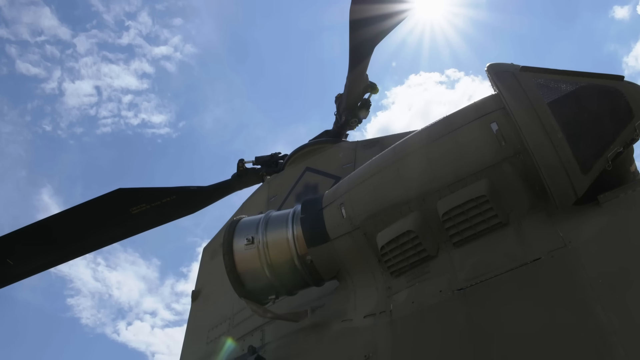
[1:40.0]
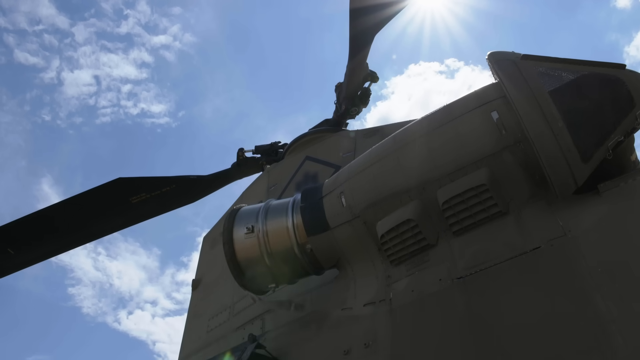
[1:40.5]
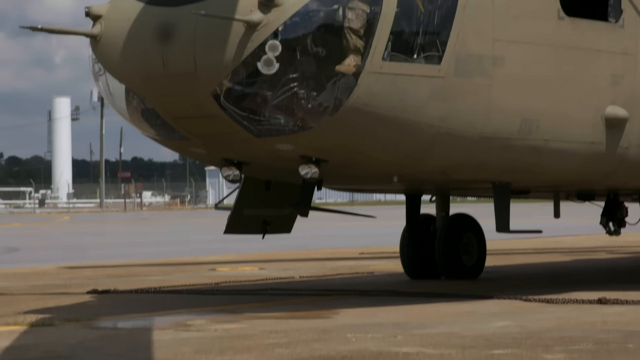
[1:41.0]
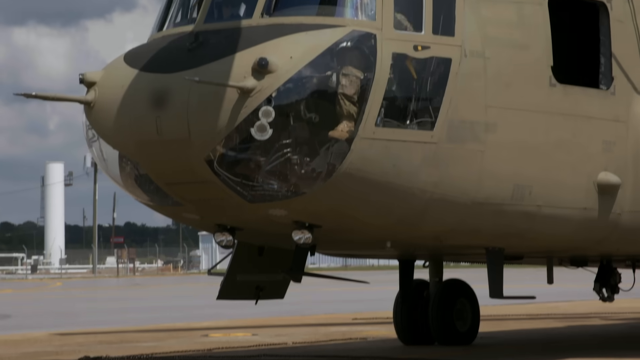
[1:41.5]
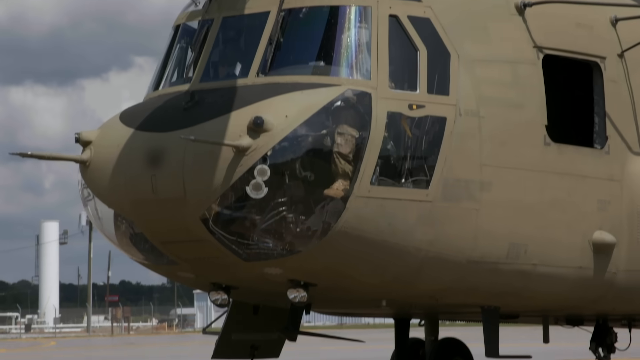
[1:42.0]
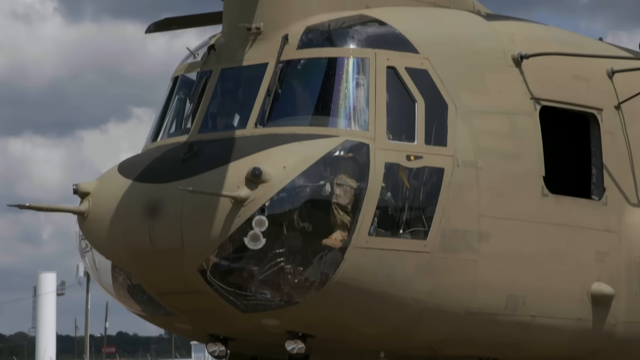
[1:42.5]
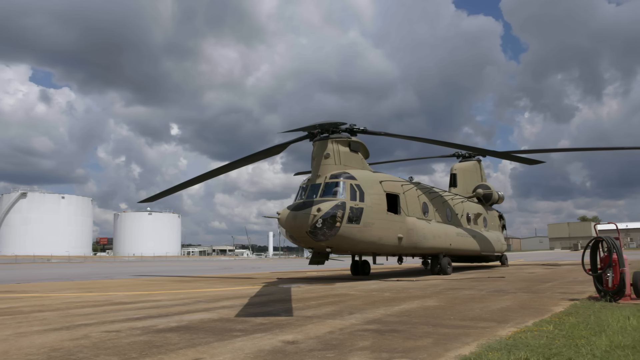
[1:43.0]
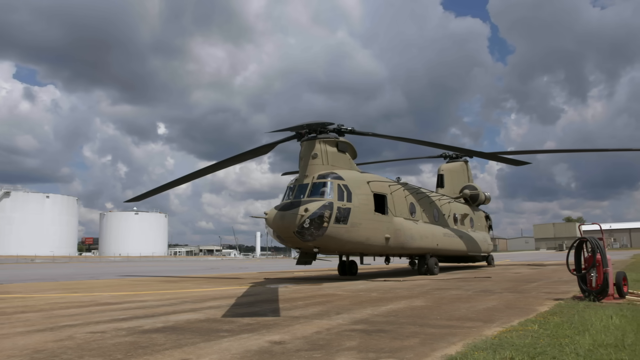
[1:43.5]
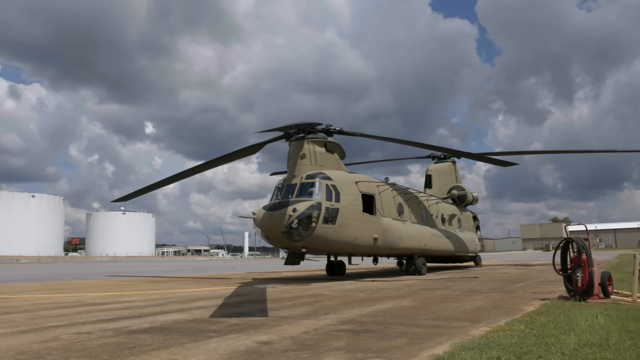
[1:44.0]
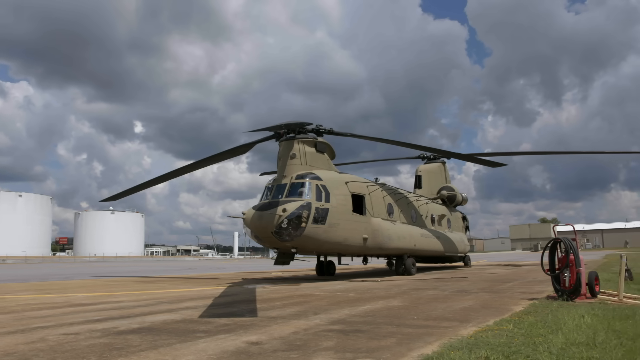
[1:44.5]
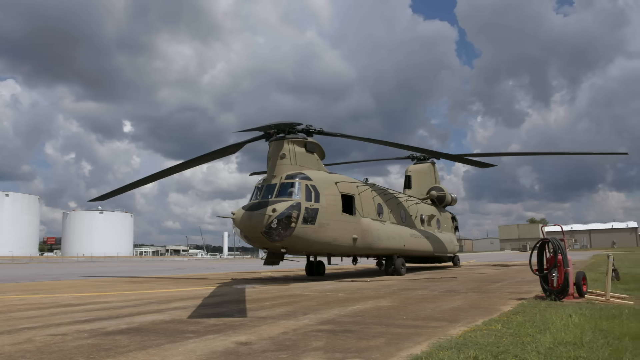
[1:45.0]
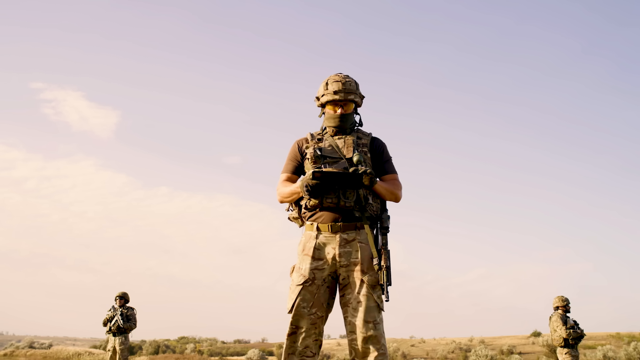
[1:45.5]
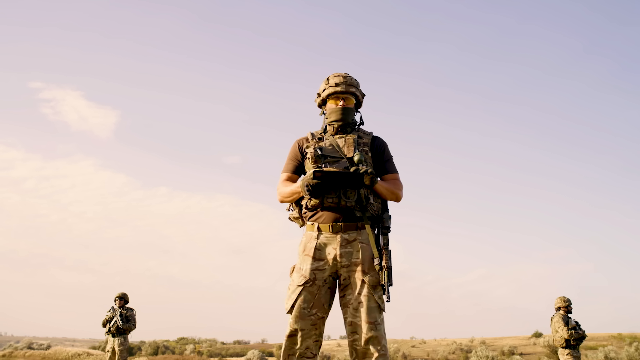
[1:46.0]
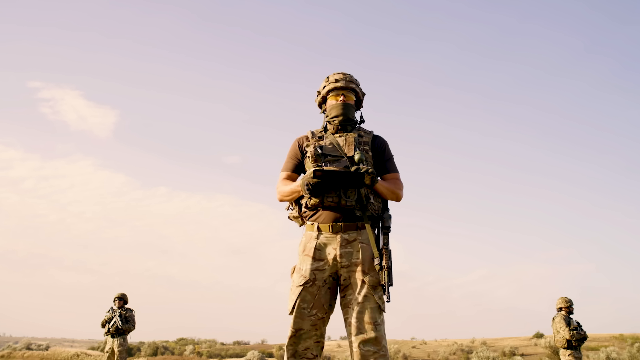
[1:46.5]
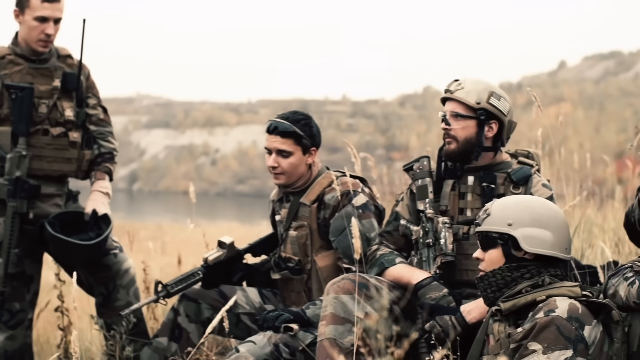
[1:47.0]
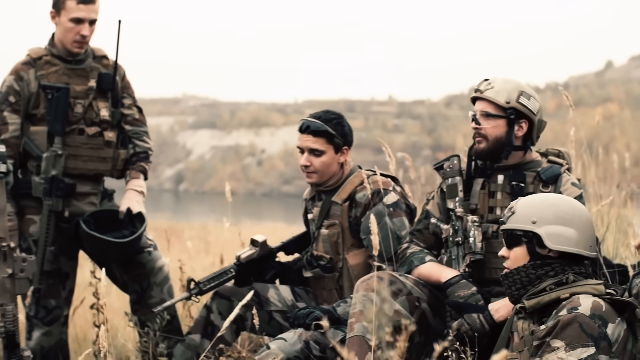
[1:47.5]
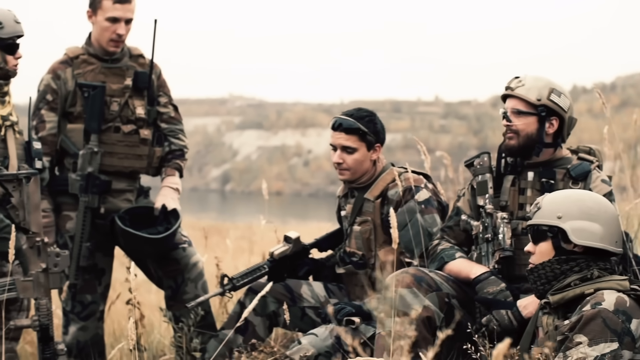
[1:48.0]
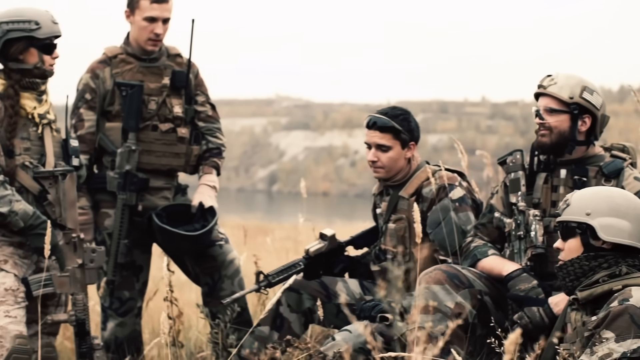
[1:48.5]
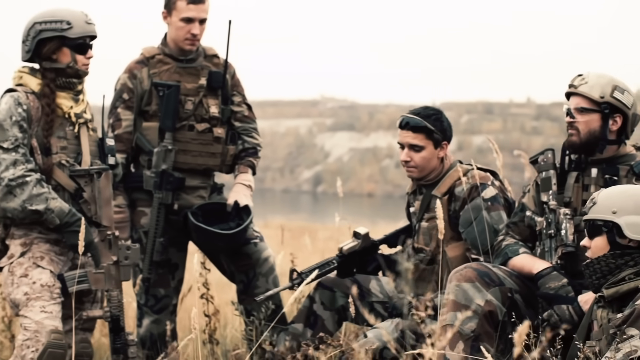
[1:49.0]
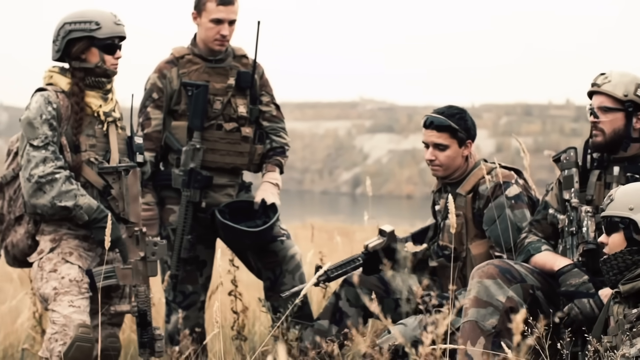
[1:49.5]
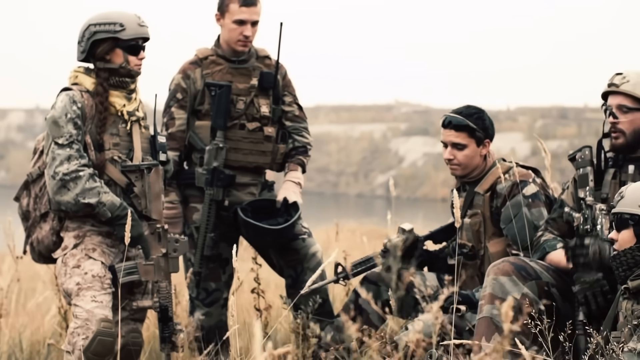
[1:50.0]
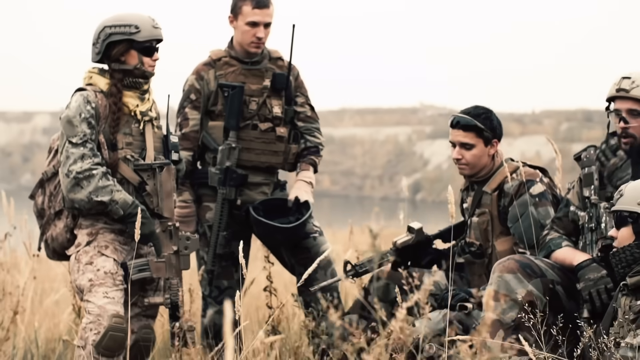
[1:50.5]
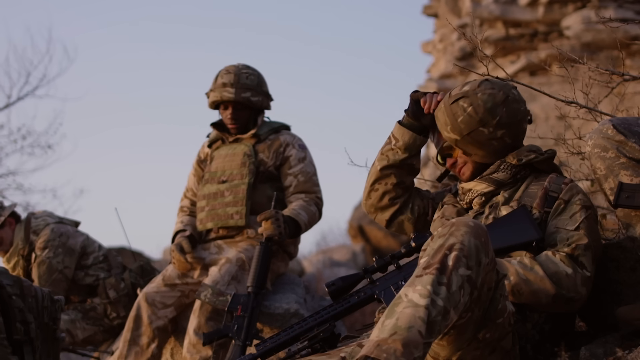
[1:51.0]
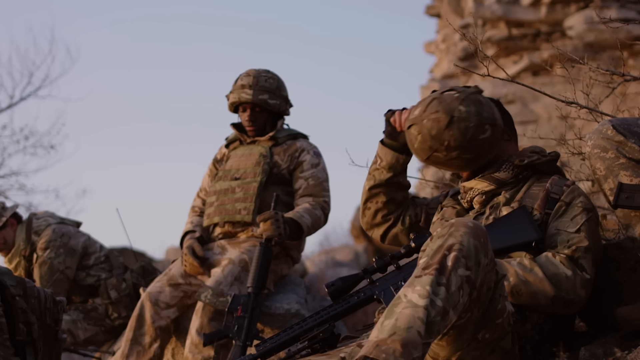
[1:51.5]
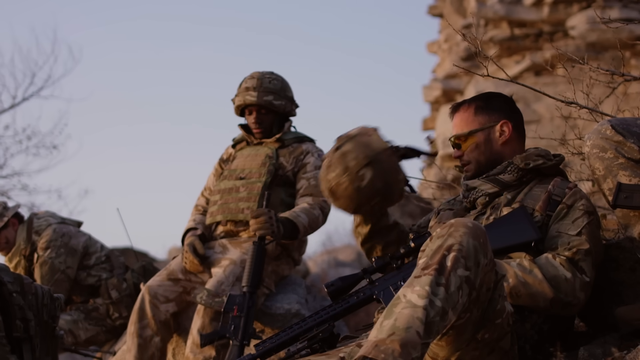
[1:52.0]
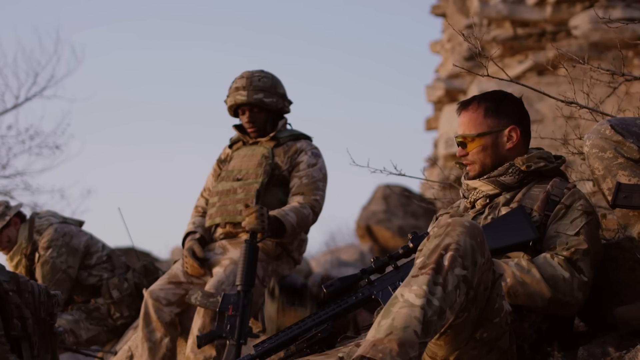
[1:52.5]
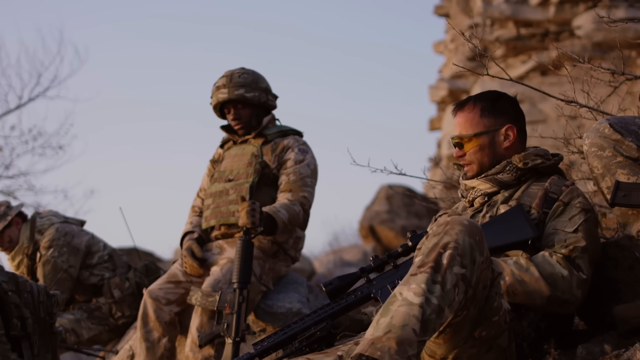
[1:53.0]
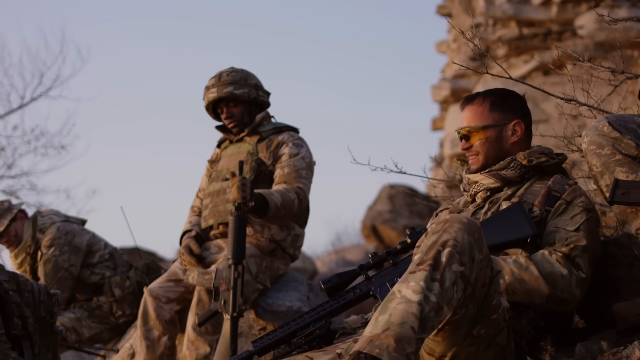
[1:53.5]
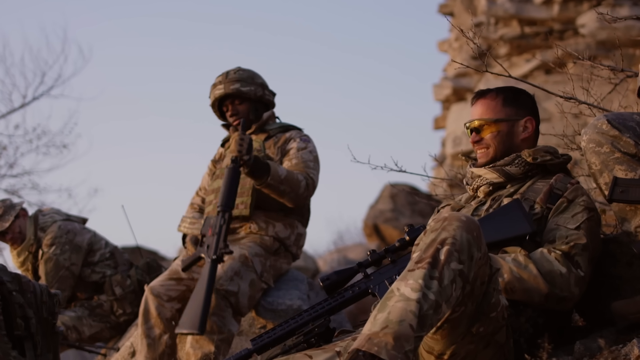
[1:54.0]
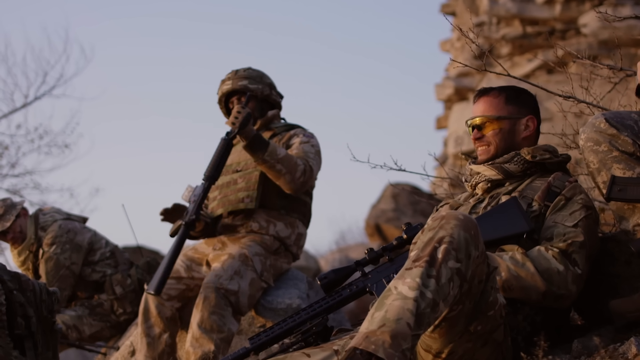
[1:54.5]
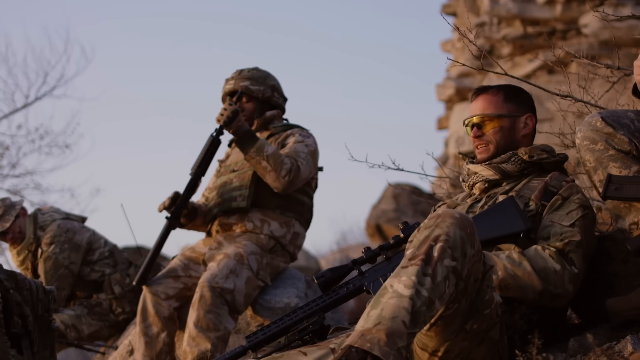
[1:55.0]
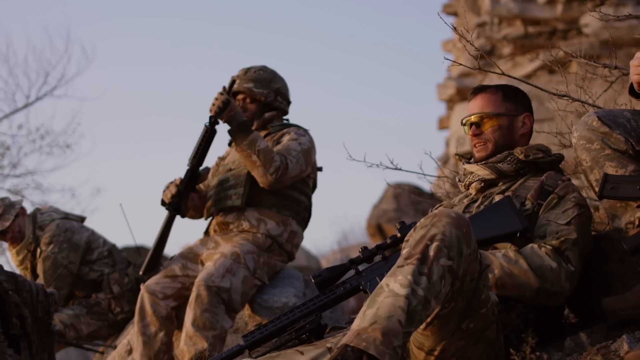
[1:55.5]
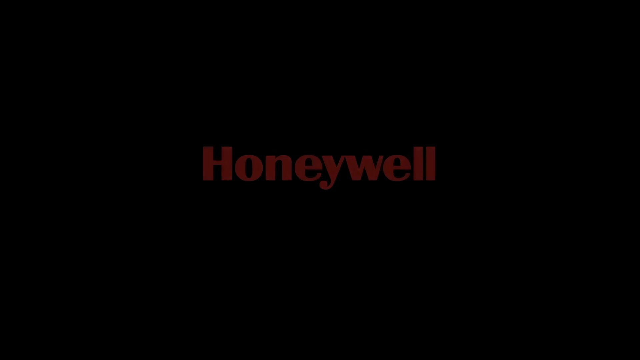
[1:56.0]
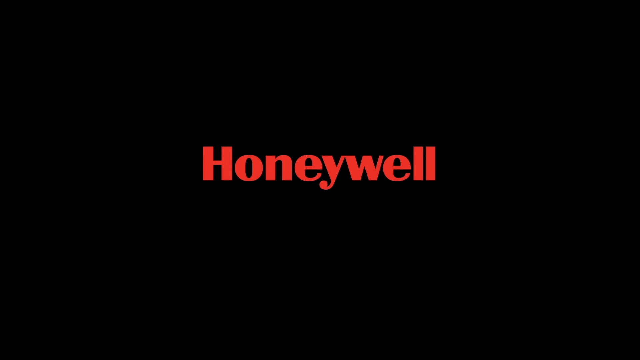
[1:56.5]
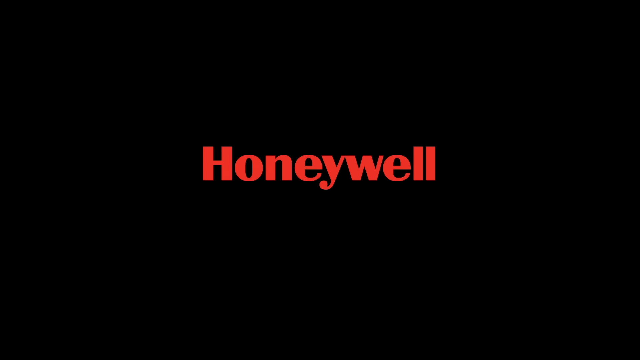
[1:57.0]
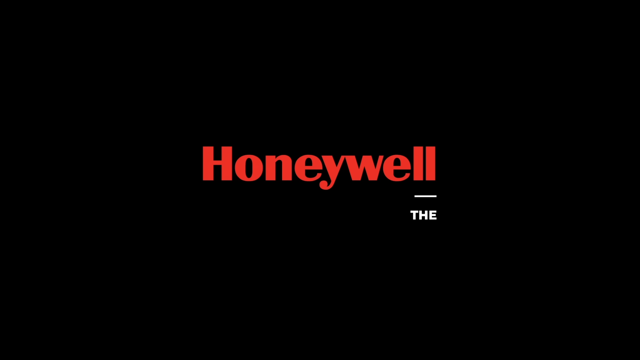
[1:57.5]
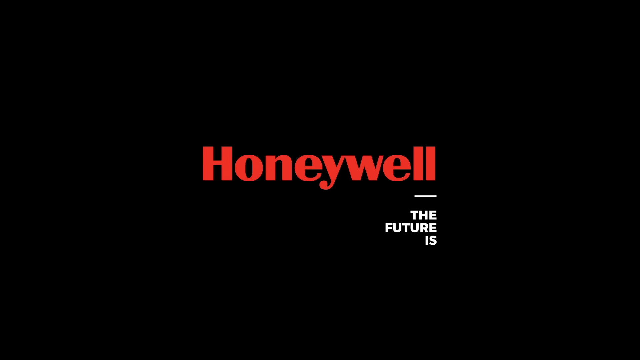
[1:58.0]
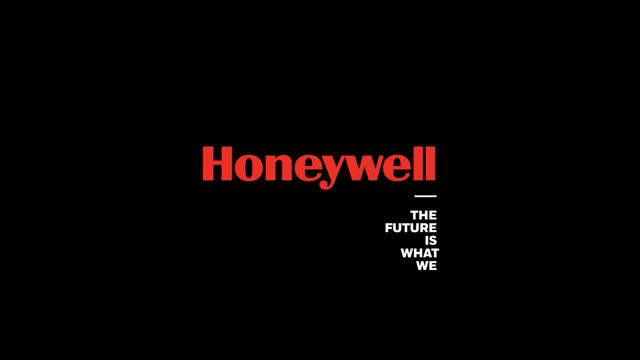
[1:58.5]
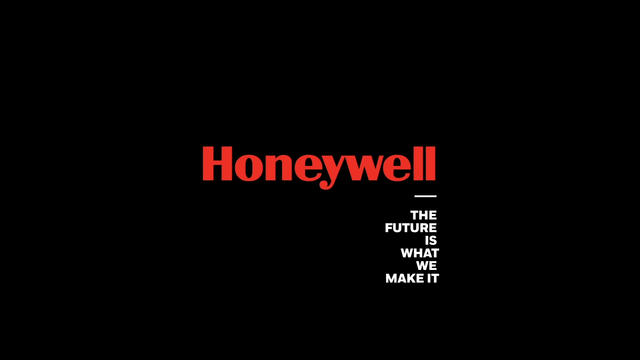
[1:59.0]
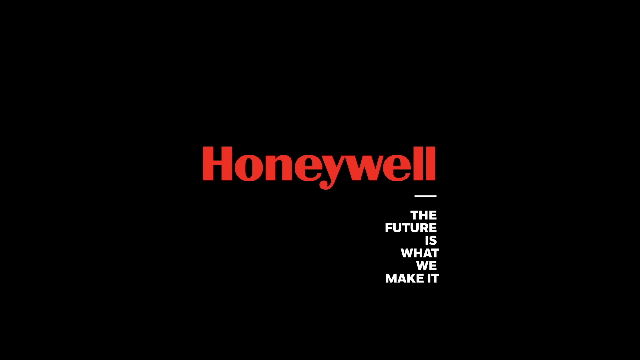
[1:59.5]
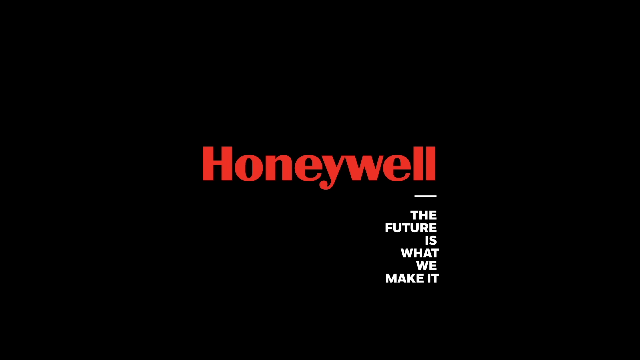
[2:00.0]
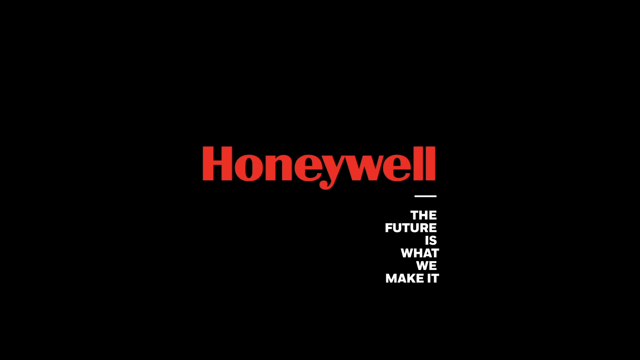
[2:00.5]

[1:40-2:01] An Army aircraft is on an open area that looks like part of a runway, with two big white water containers next to it under a very cloudy sky. An Army person has a clipboard. A few Army members sit on the ground, talking amongst themselves; two of them are standing, and two others are in a field. One takes off his hat with his right hand, and the one next to him brings up his long rifle. On a black screen, "Honeywell" appears in red letters, with "The future is what we make it" in white letters running vertically.